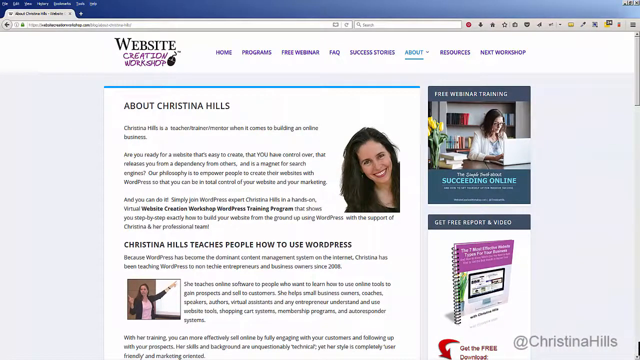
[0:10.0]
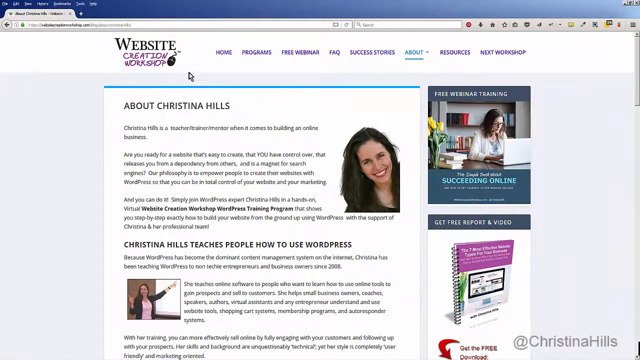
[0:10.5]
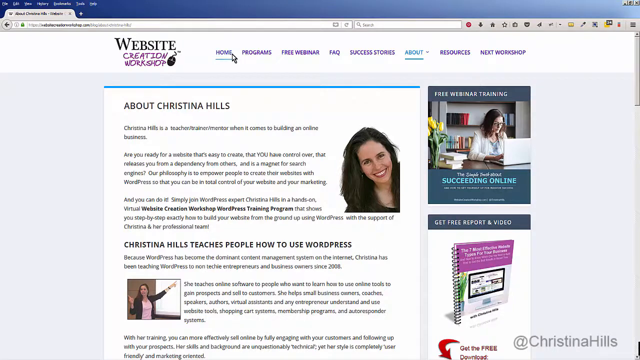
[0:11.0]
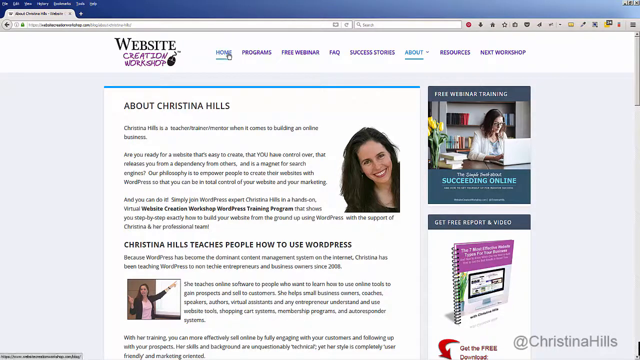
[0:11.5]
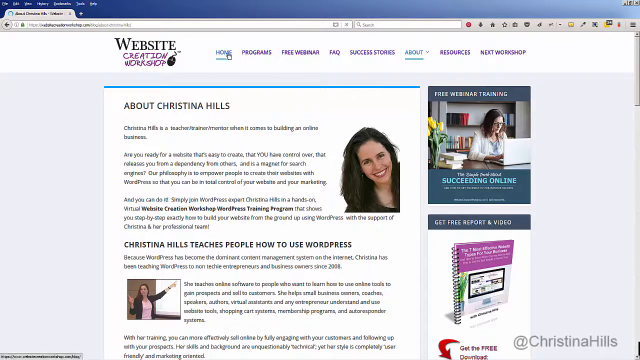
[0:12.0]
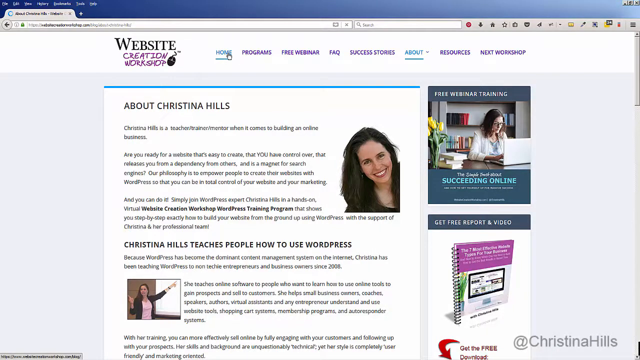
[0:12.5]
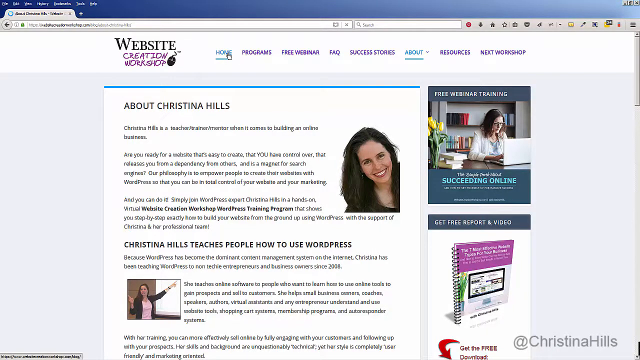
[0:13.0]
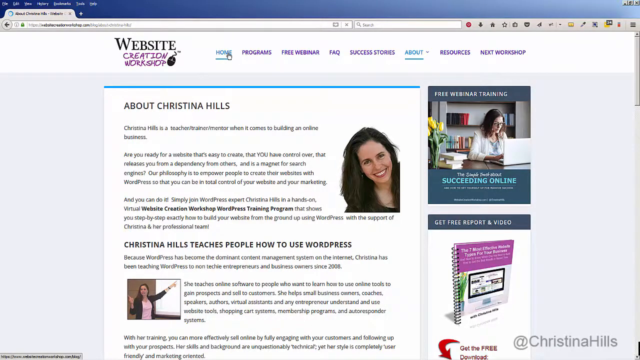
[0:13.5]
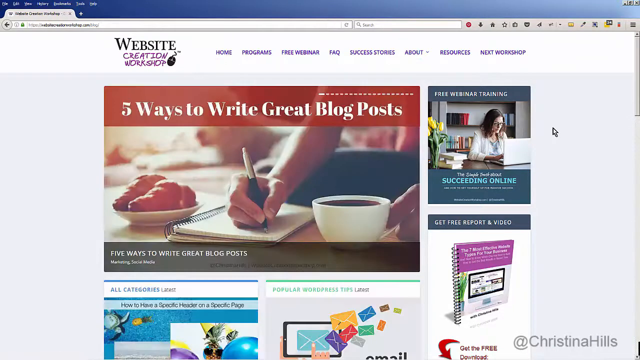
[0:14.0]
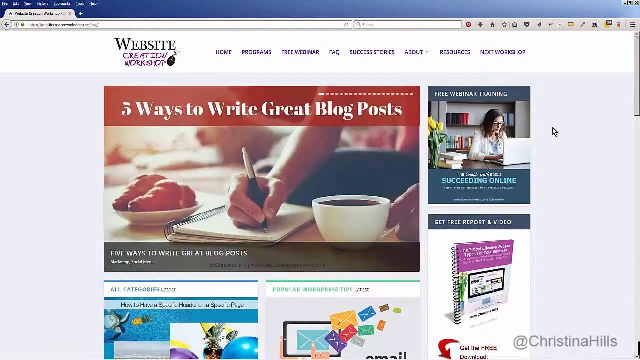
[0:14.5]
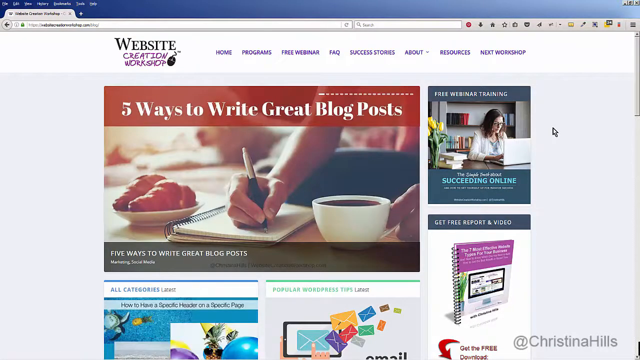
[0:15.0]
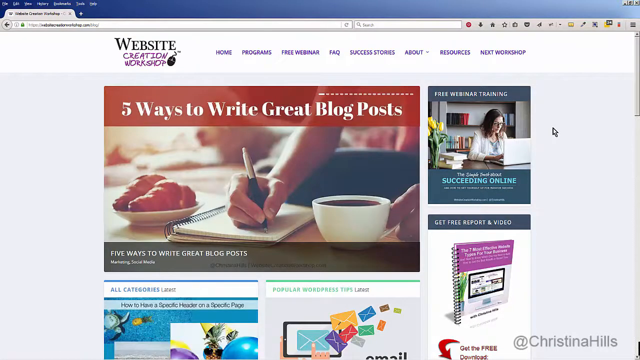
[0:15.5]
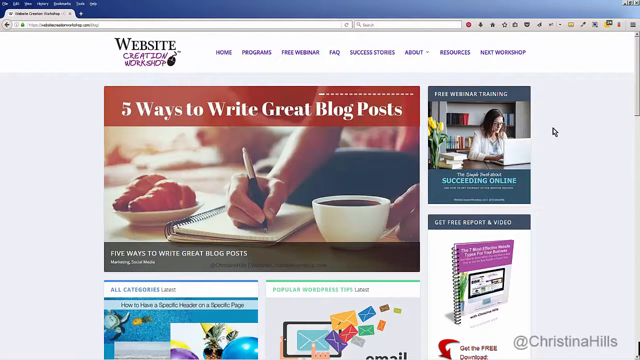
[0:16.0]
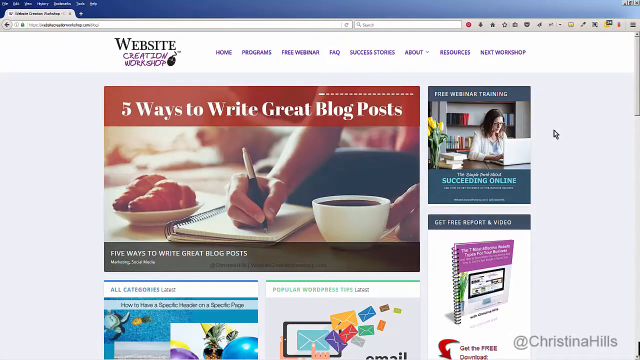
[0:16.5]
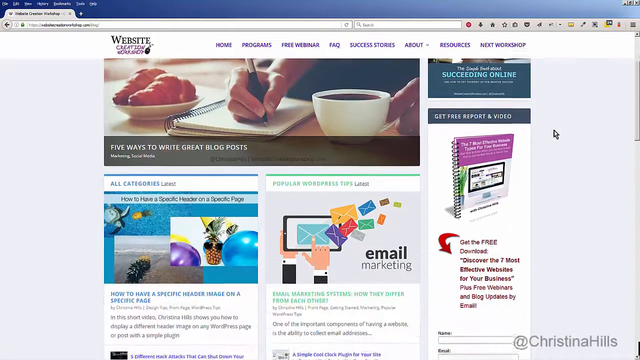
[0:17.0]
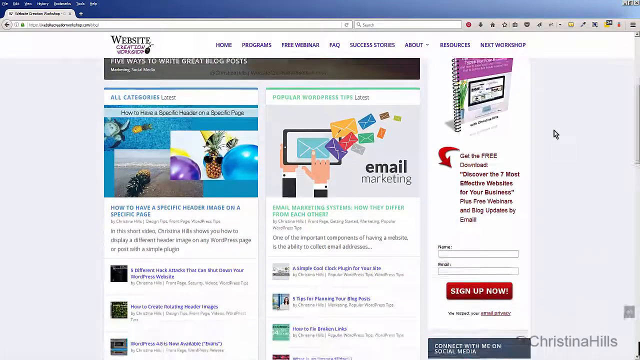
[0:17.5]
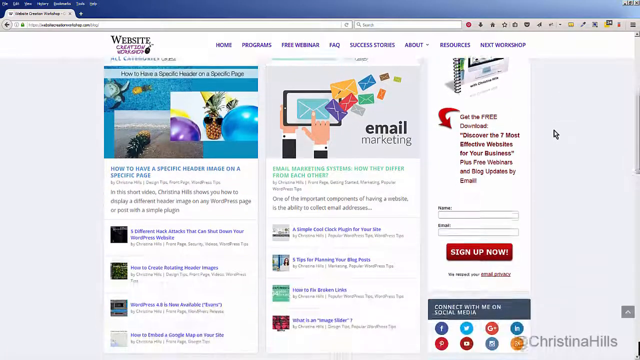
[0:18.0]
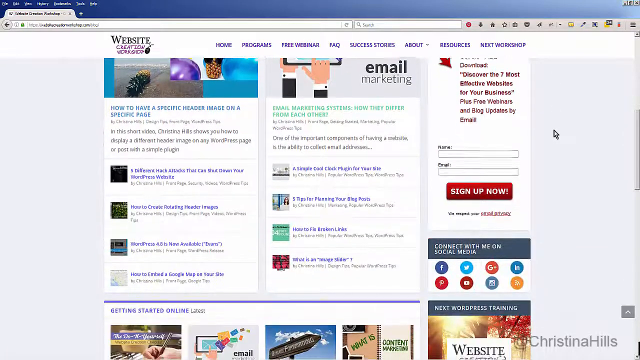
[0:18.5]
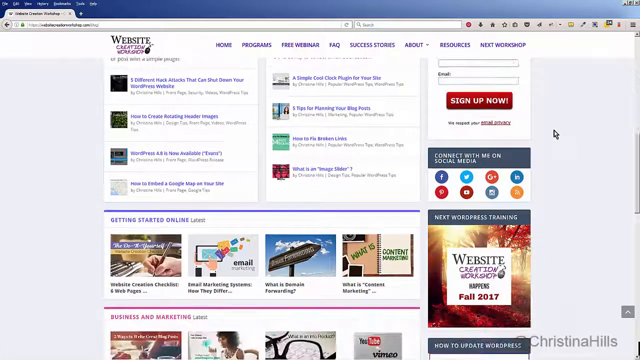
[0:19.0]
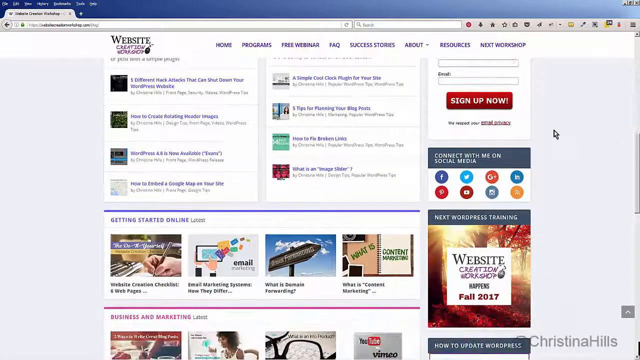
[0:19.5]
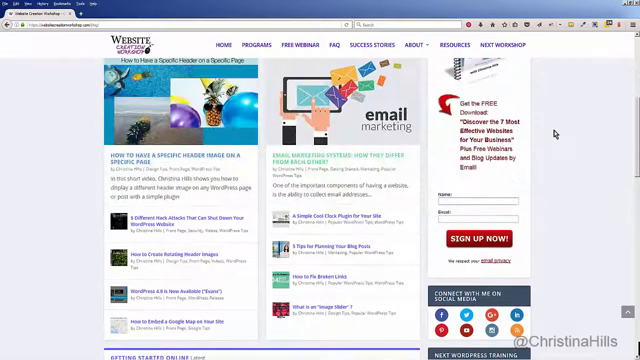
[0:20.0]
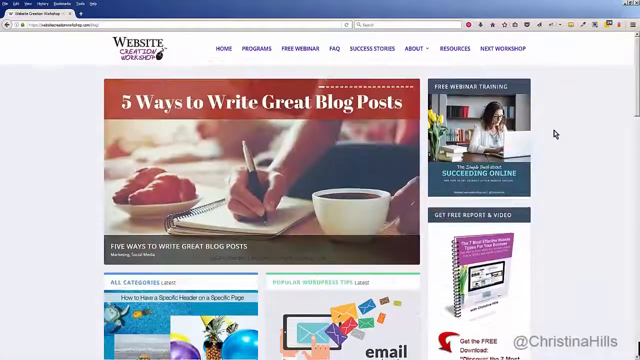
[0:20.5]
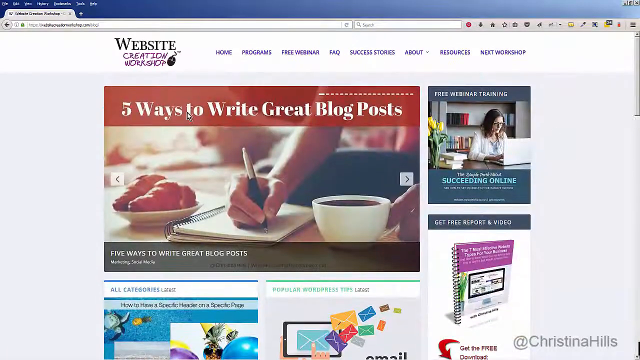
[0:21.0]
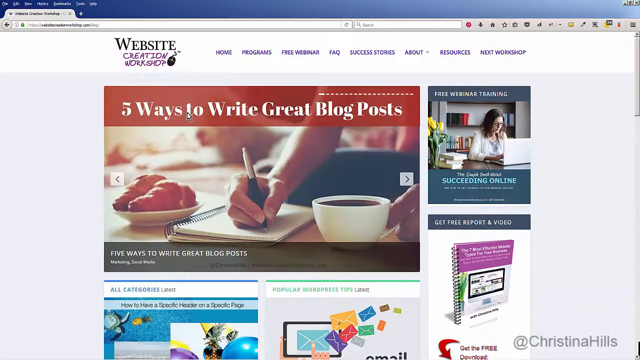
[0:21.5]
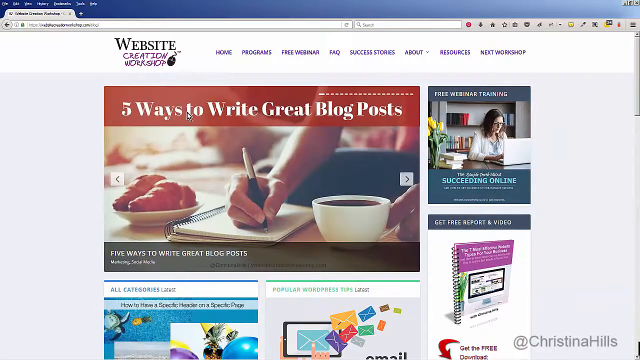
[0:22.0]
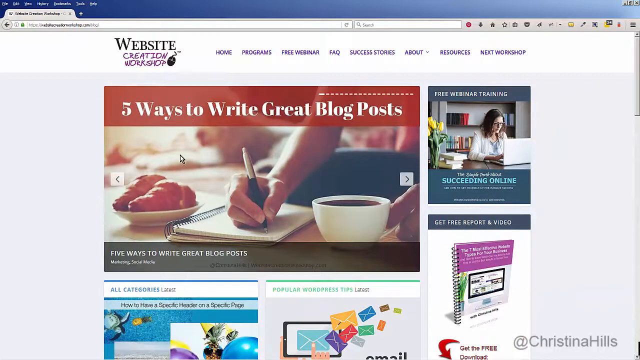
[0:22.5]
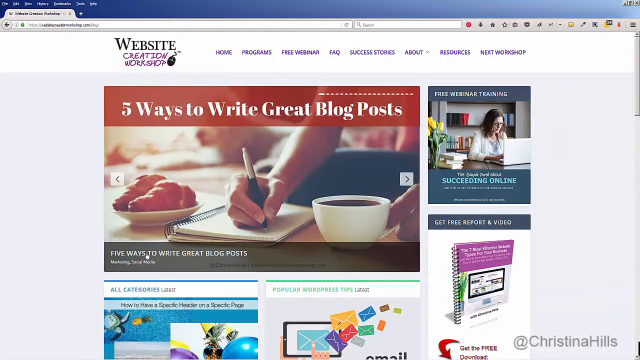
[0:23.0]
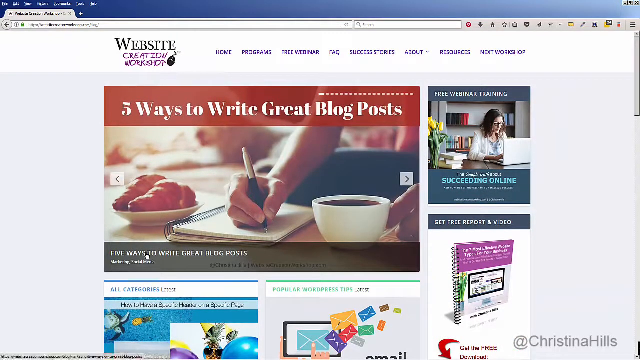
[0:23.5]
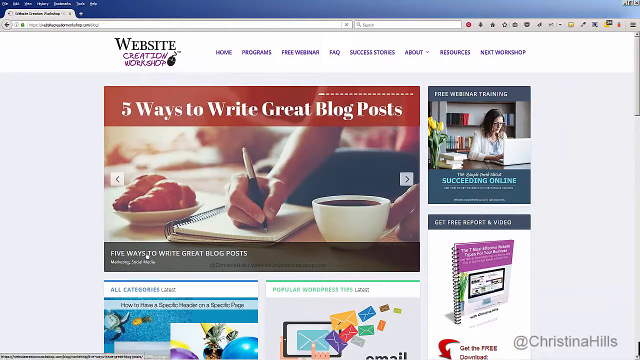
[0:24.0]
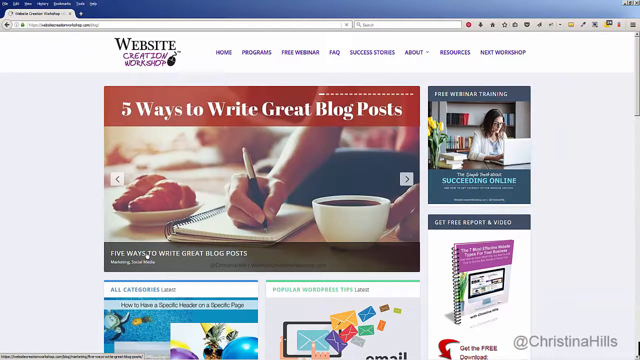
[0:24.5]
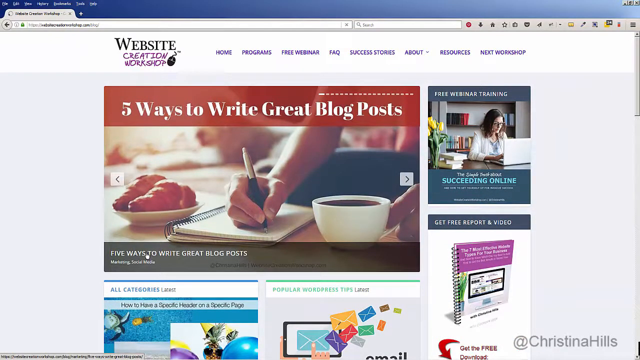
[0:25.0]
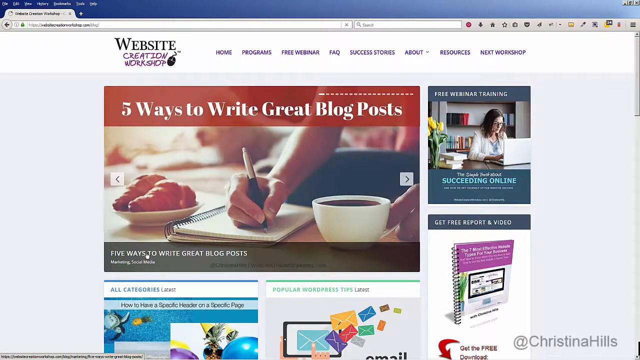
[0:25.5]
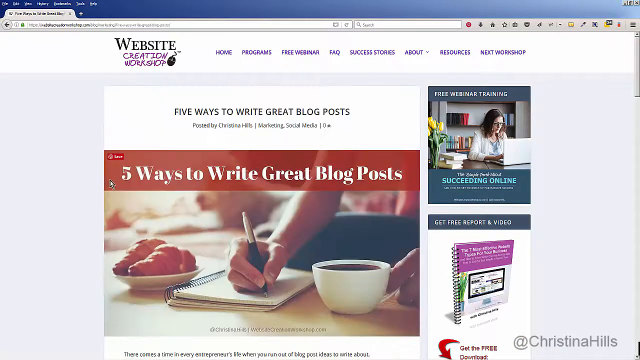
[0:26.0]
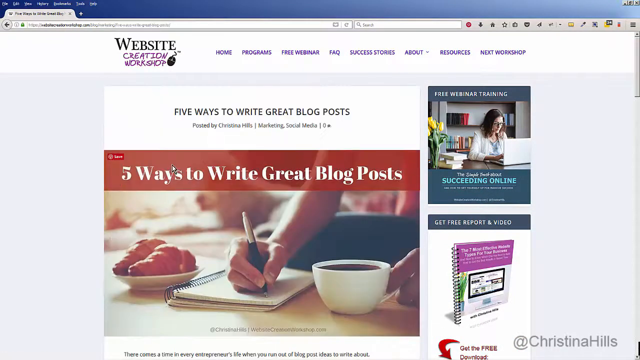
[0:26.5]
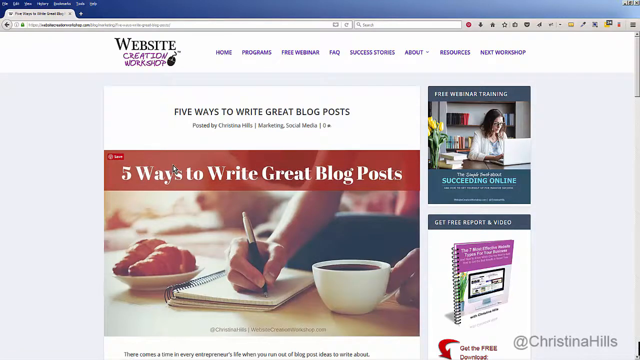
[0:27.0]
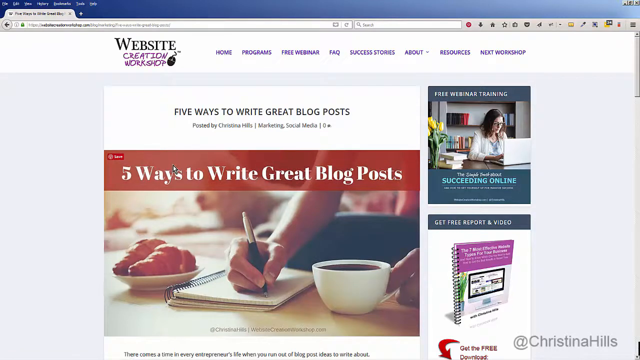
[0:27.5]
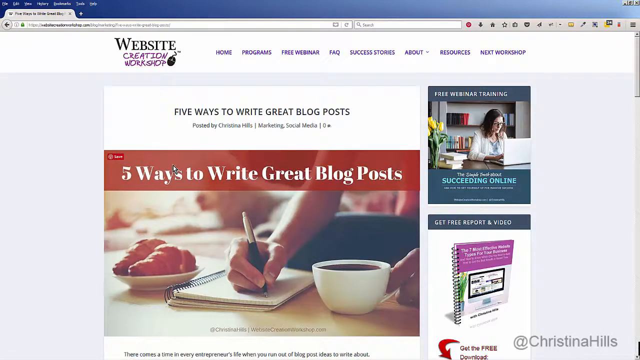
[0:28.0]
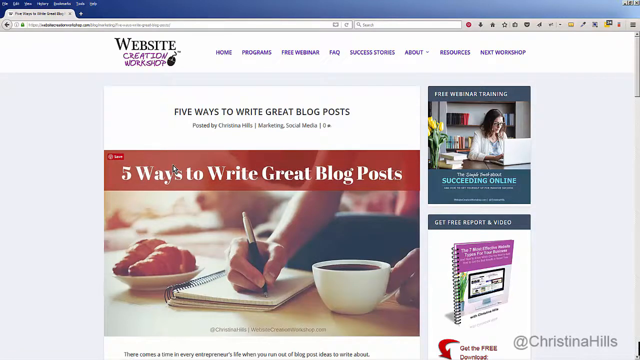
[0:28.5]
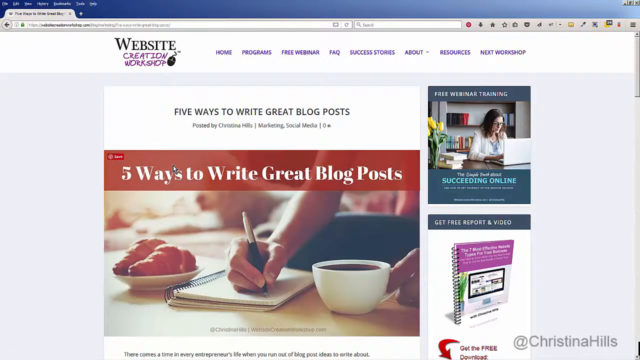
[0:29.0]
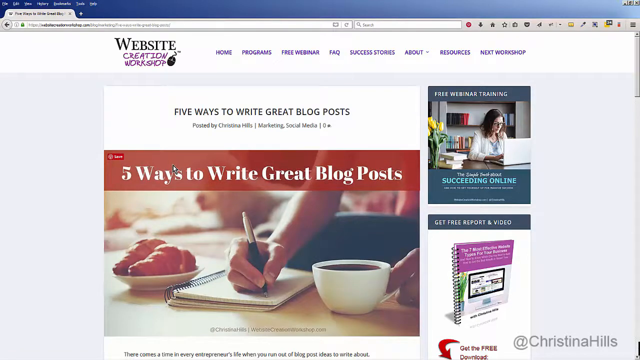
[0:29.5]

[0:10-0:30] Someone scrolls through a website called the Website Creation Workshop. The first page shown has a biography and photograph of the woman who runs the workshop, Christina Hills. Below the introductory paragraph about her is another paragraph headed "Christina Hills teaches people how to use WordPress." On the right side of the page are icons to click on for additional materials or specific training. Someone clicks the home page and the page changes to one headed with an article that says "Five Ways to Write Great Blog Posts." Under this is a photograph of someone's hand writing in a notebook with a pen; in their left hand they hold a white cup of coffee, and to the right of them on the table are two croissants on a white plate. The user scrolls down the page.